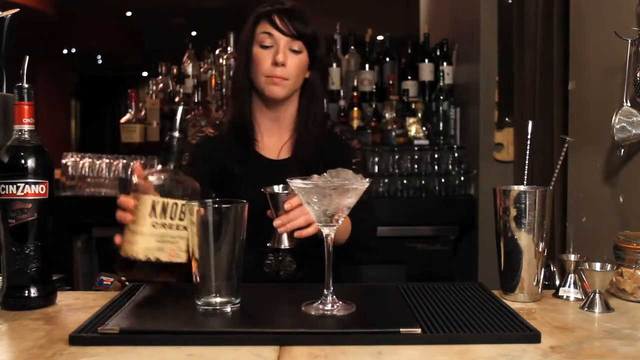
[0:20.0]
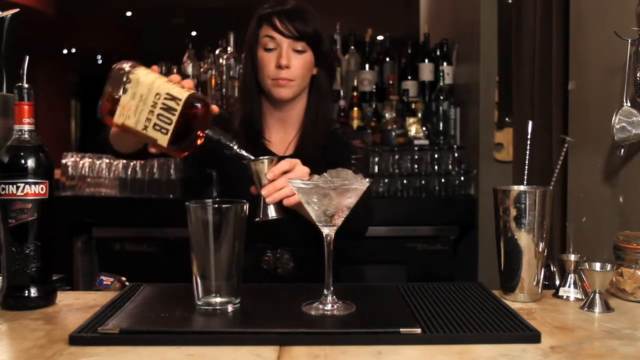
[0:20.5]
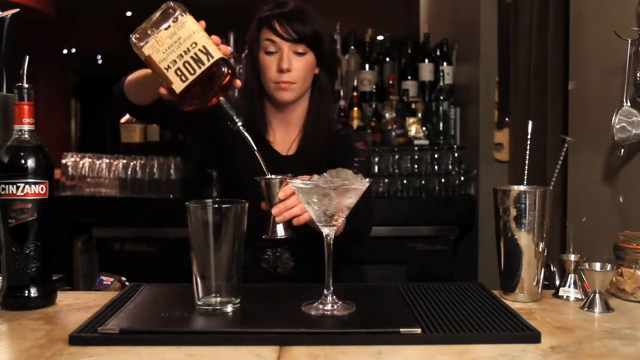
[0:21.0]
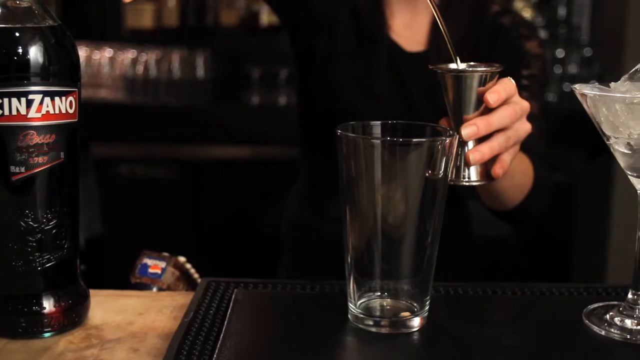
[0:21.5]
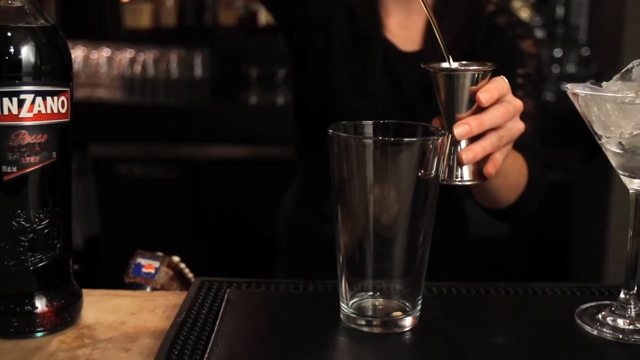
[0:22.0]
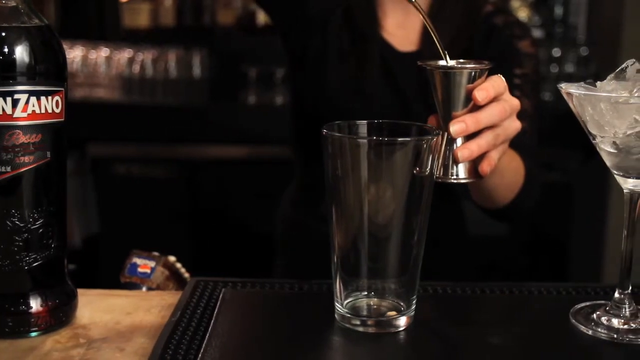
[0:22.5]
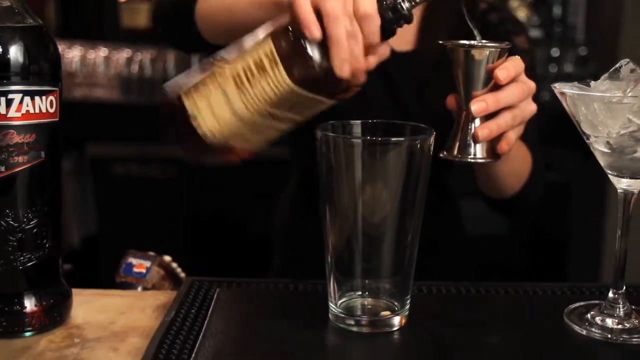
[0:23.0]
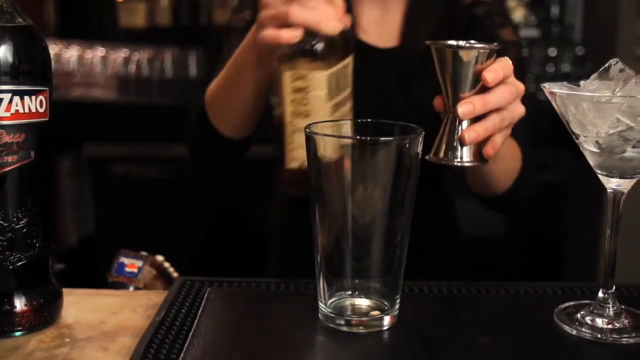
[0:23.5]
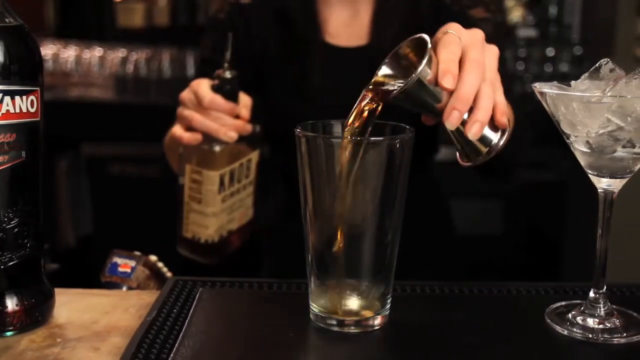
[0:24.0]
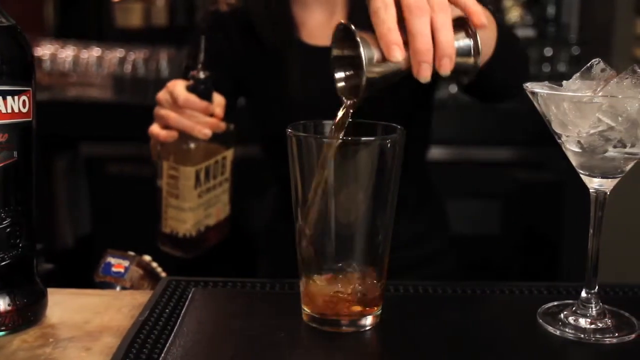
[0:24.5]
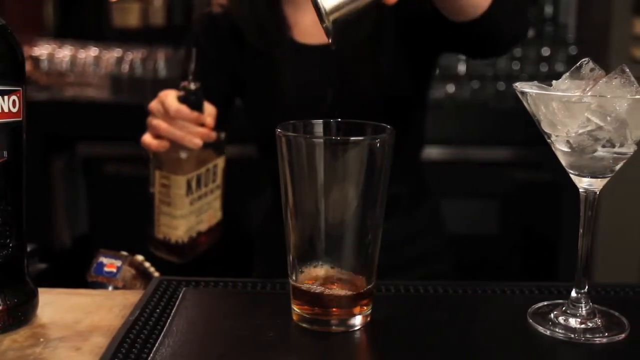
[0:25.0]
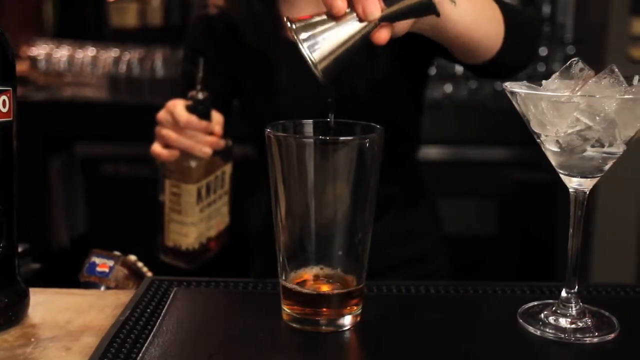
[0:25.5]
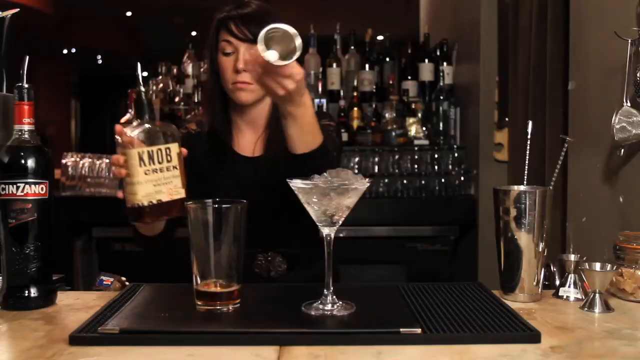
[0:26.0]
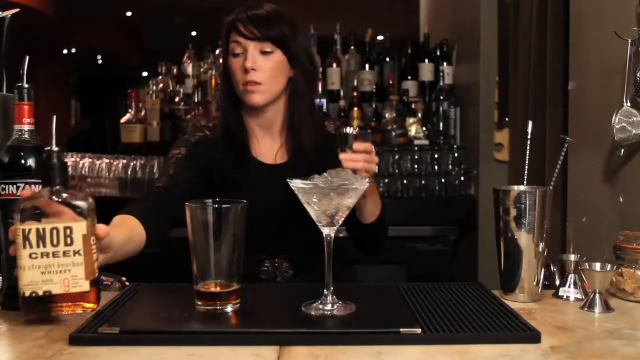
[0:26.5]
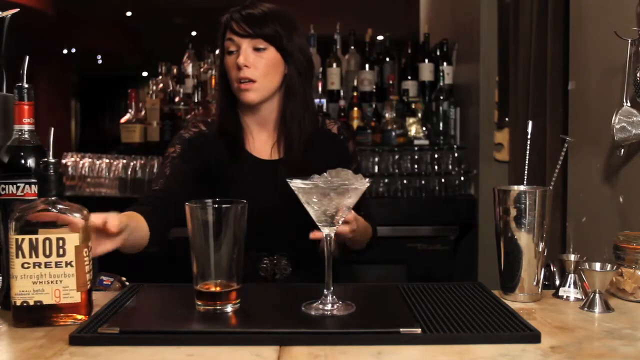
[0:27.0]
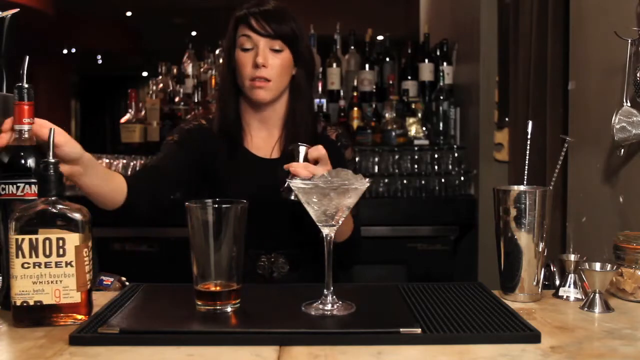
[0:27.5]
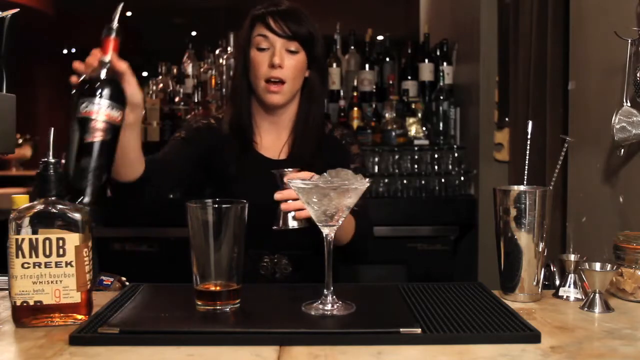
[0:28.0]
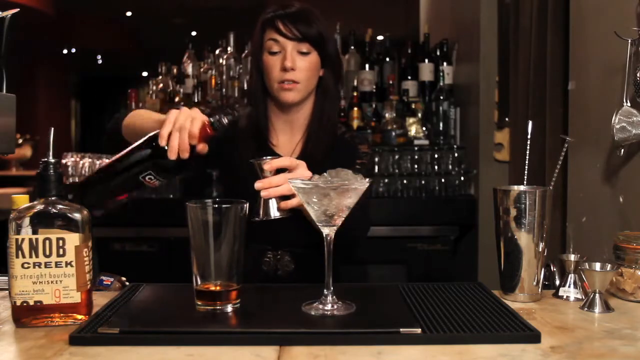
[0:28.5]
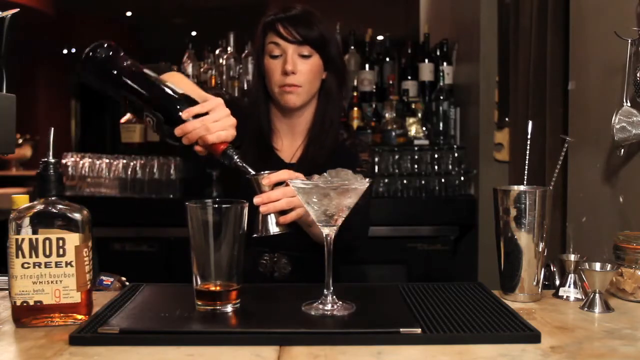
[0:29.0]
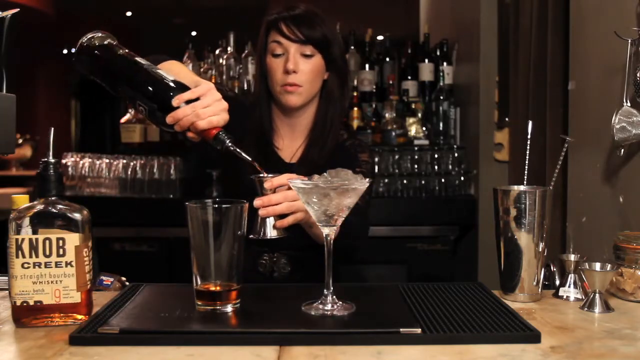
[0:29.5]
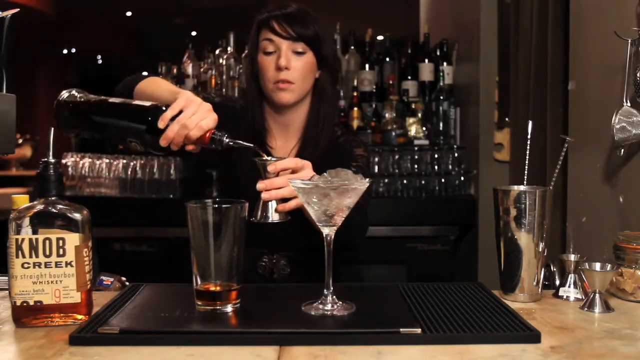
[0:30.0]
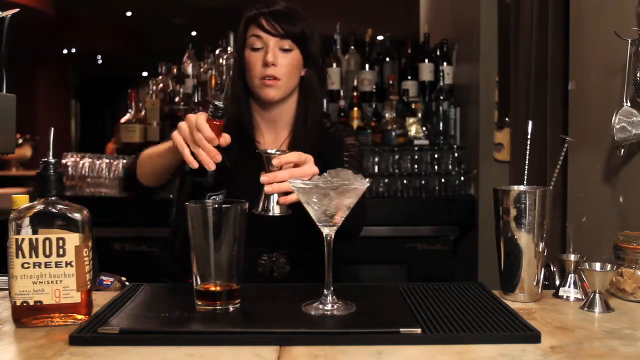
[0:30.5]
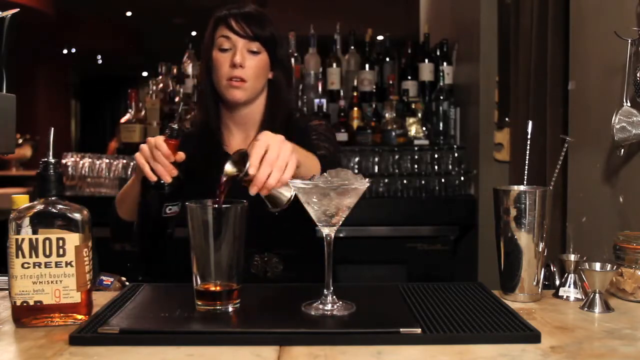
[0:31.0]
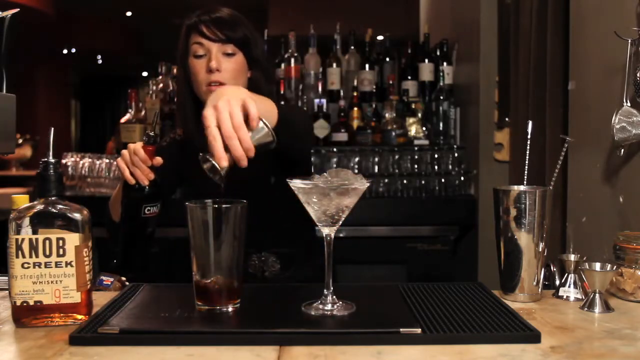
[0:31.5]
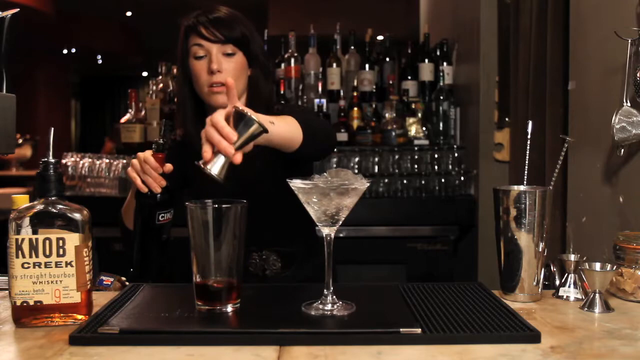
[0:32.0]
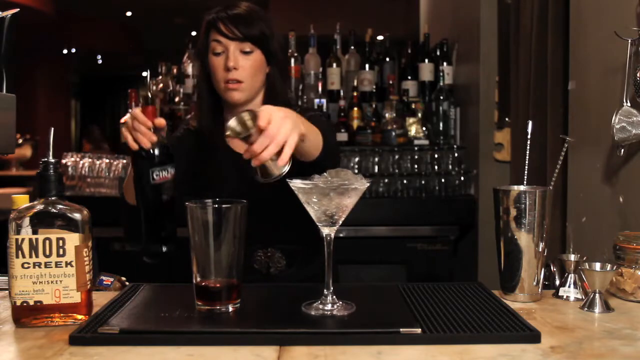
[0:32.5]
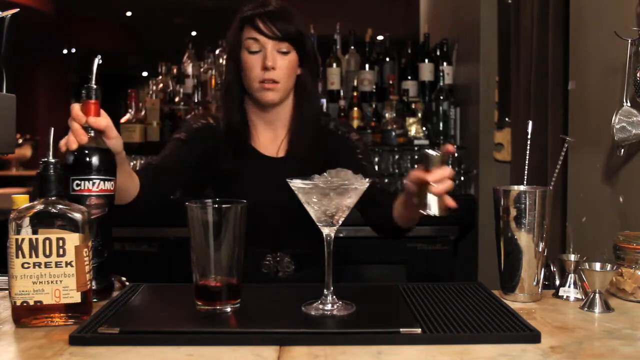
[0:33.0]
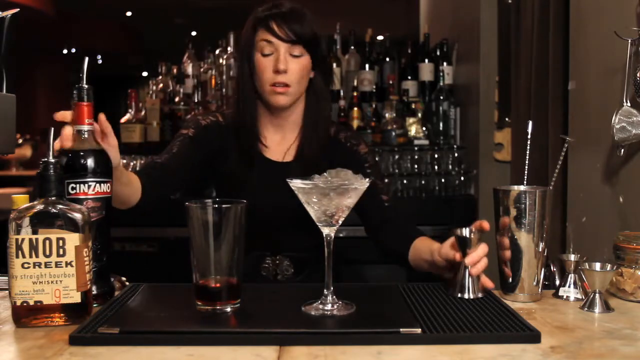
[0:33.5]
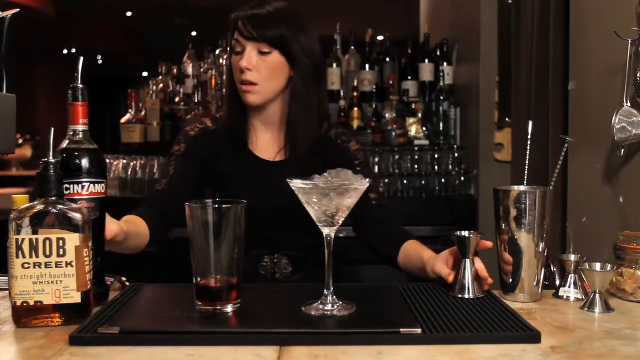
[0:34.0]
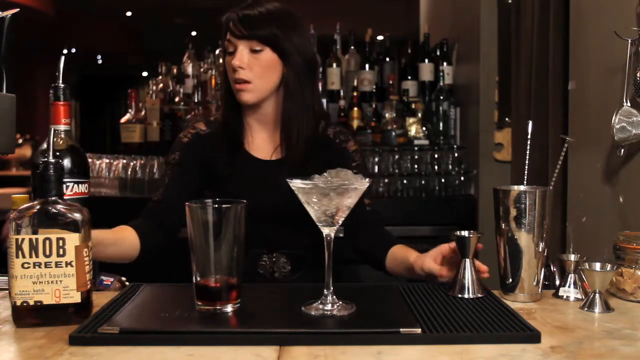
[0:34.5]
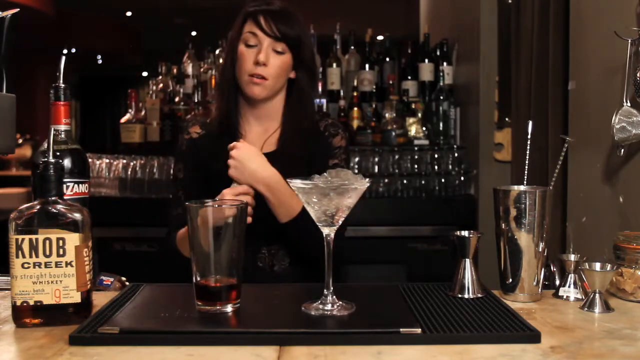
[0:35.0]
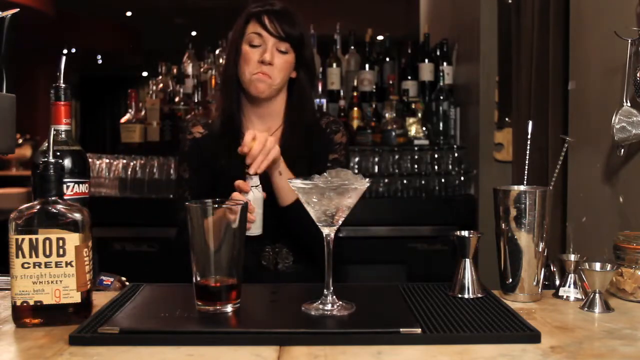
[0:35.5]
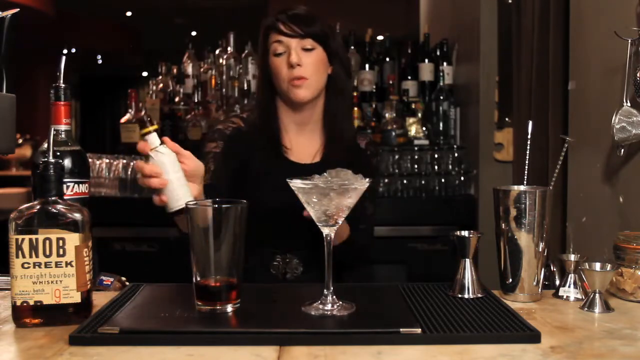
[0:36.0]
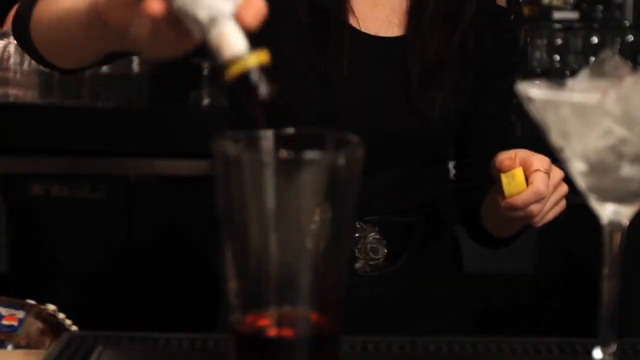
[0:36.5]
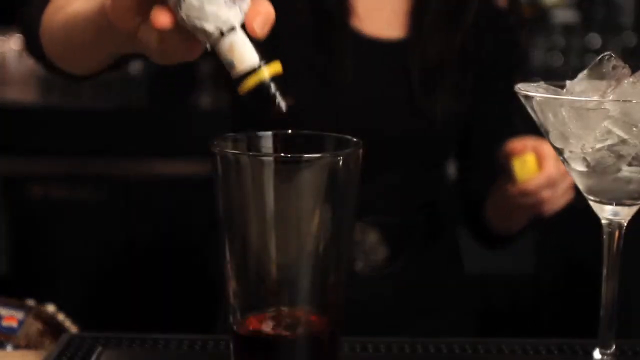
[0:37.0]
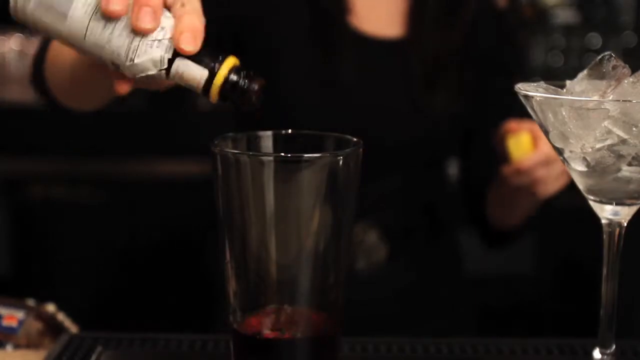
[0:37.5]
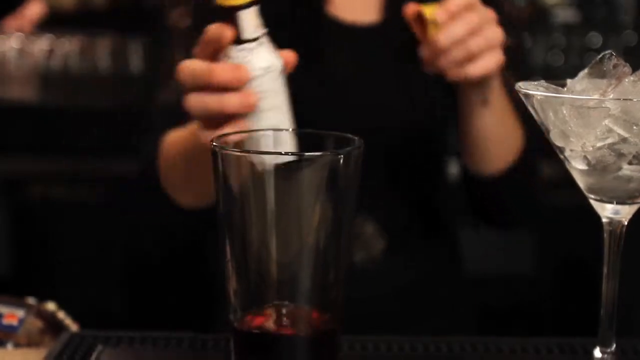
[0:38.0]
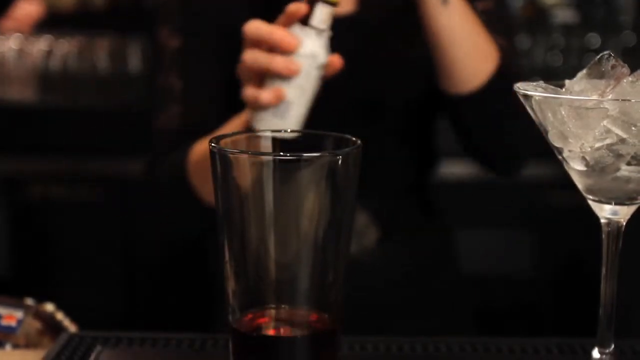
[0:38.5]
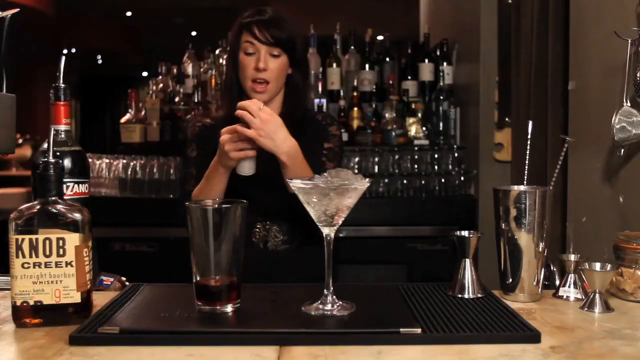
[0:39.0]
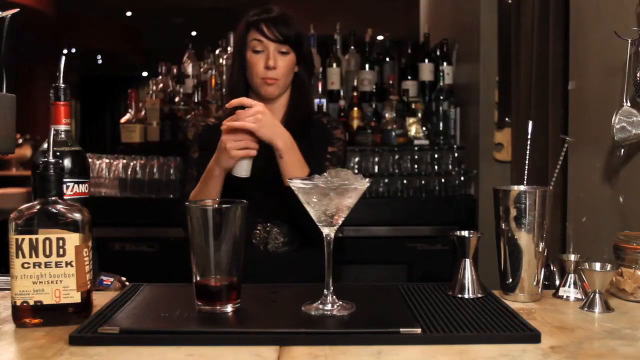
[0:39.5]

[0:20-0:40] The woman tips the bottle over, holding it in her hand and pouring it into the measuring device; the liquid can be seen pouring out of the tip. She turns the bottle back upright and pours the measured amount into the glass in front of her. She puts down the bottle, which says "knob creak" on it. She reaches for another bottle, measures it out into the metal measuring device as well, pours that into the glass, and puts the bottle back. She then reaches for another bottle, a small one that is somewhat out of frame, pours it into the glass as well, and puts the lid back on it. The shot cuts as she is about to put that bottle back.